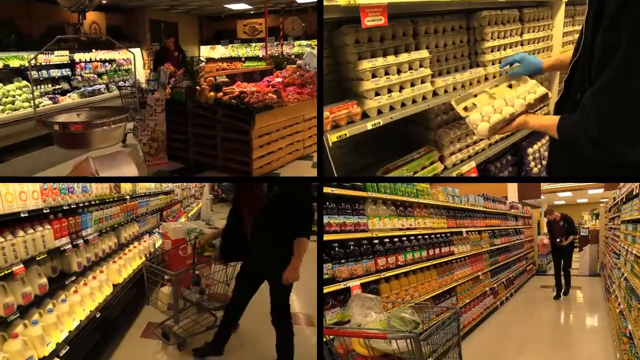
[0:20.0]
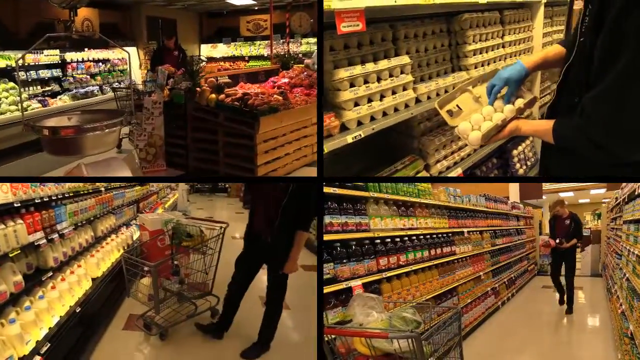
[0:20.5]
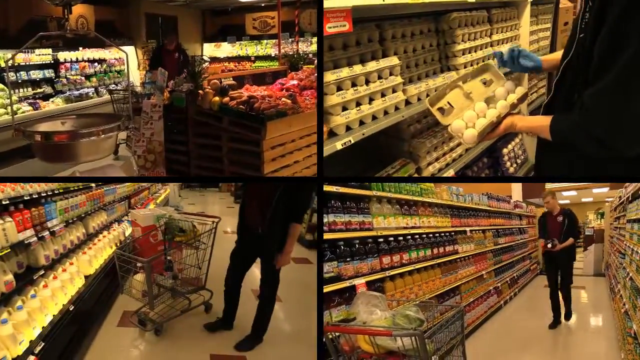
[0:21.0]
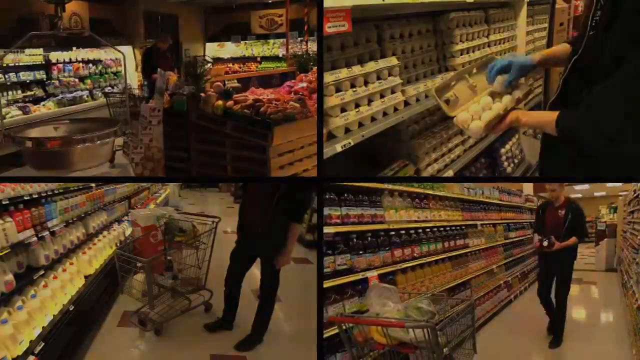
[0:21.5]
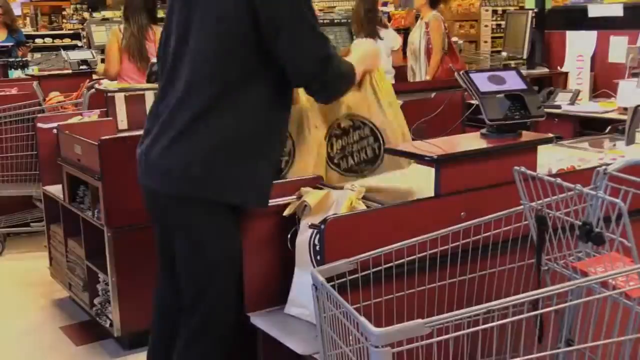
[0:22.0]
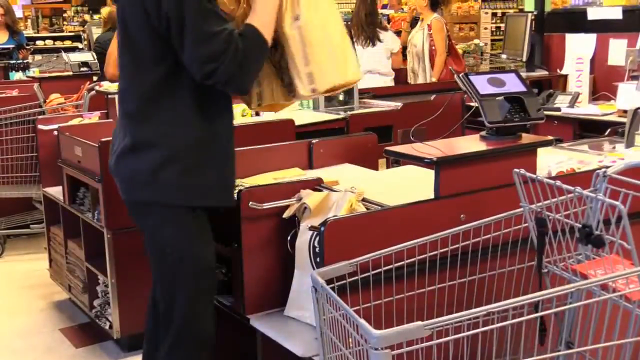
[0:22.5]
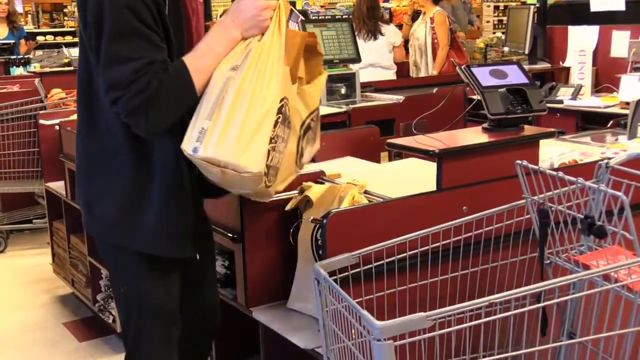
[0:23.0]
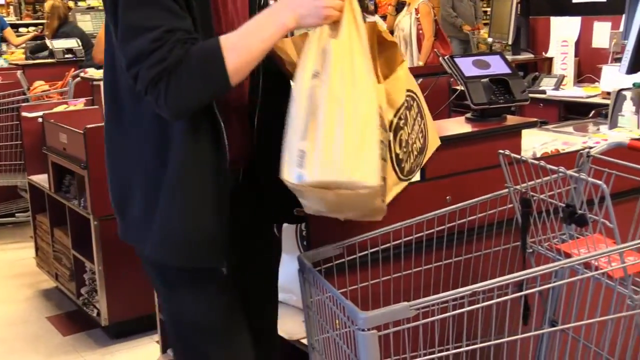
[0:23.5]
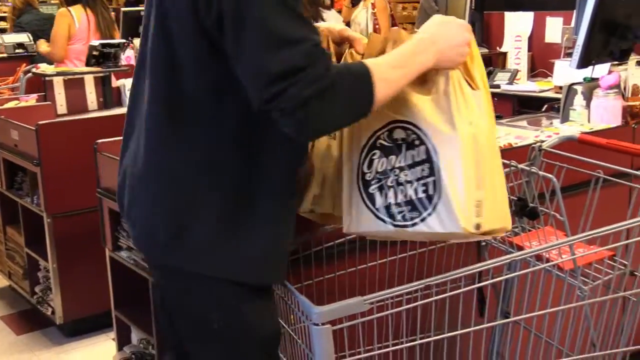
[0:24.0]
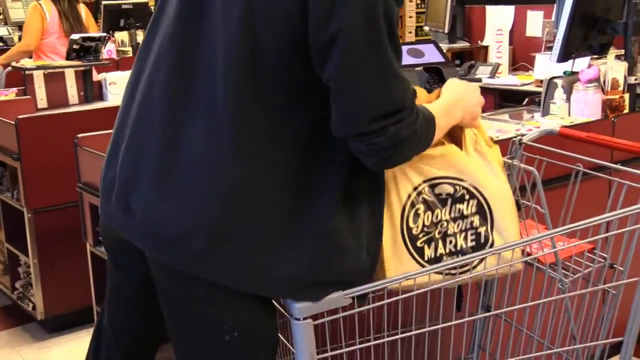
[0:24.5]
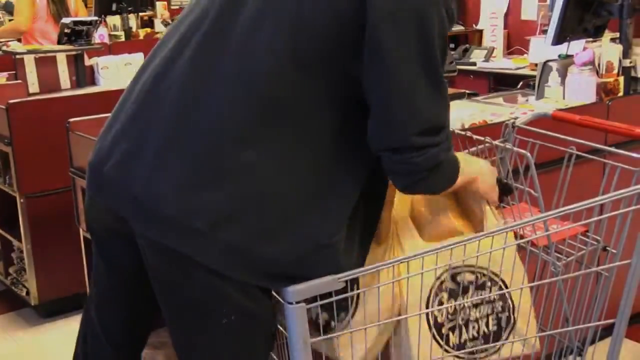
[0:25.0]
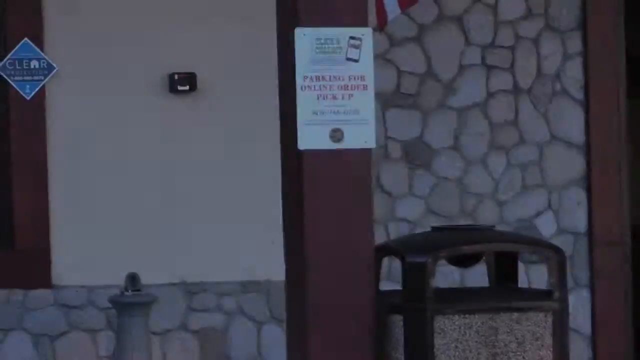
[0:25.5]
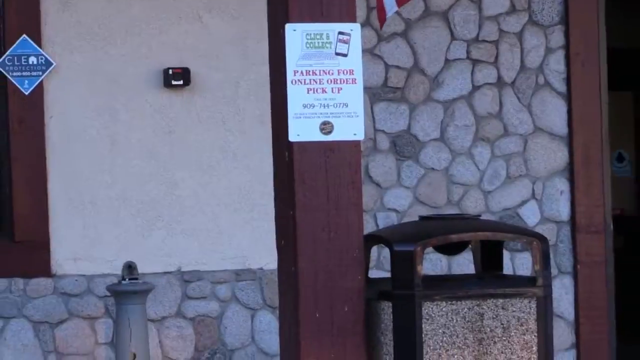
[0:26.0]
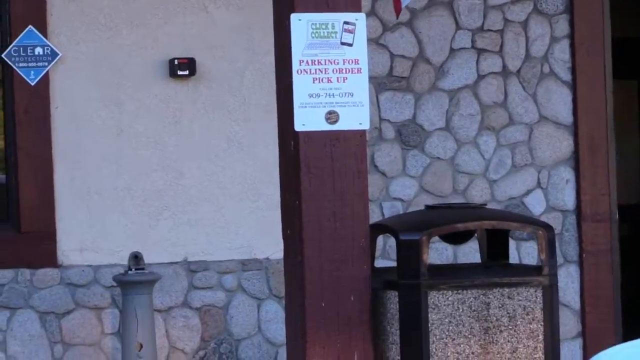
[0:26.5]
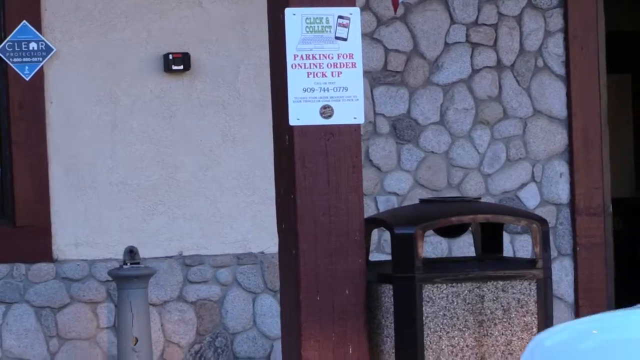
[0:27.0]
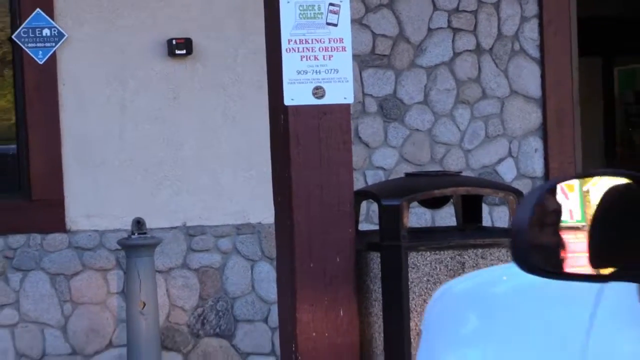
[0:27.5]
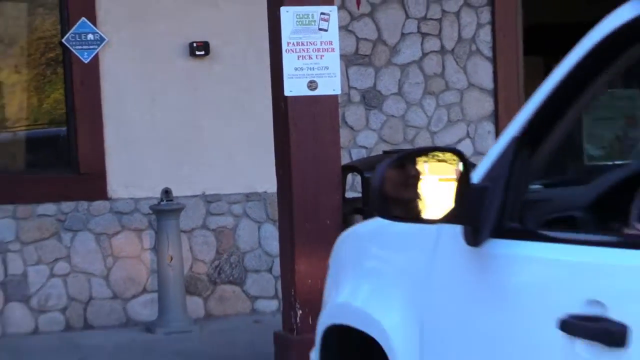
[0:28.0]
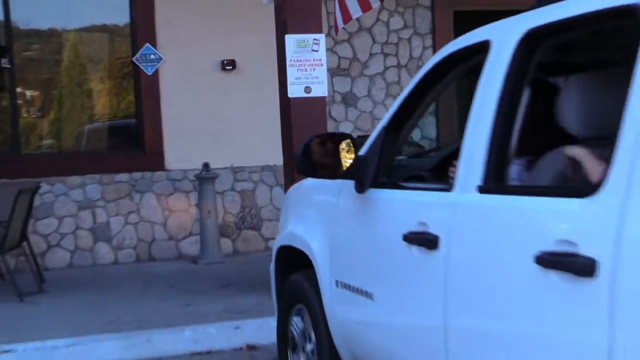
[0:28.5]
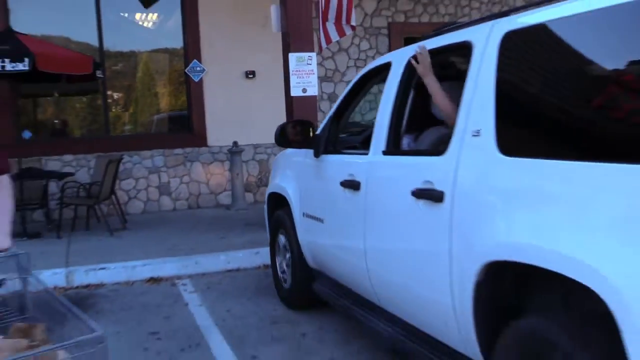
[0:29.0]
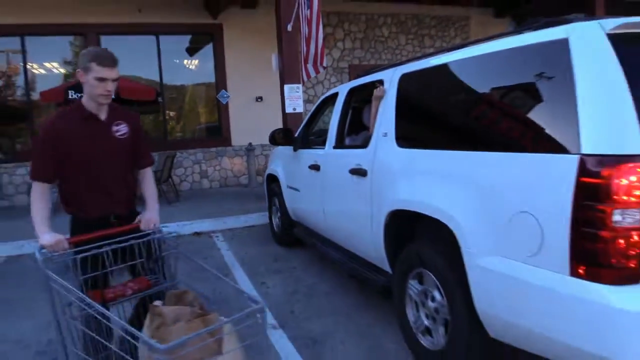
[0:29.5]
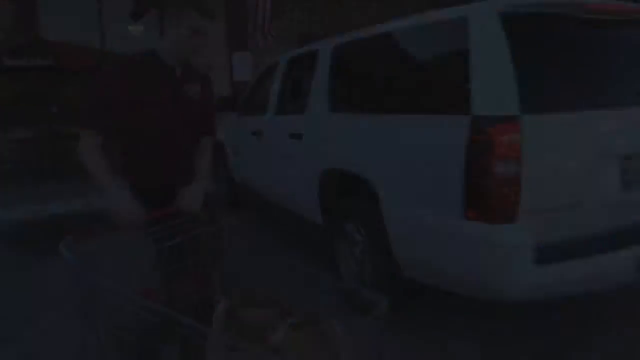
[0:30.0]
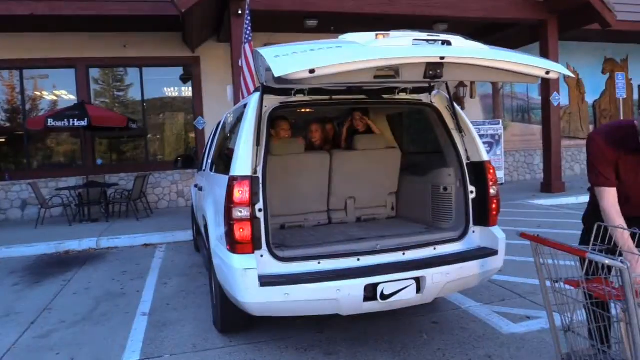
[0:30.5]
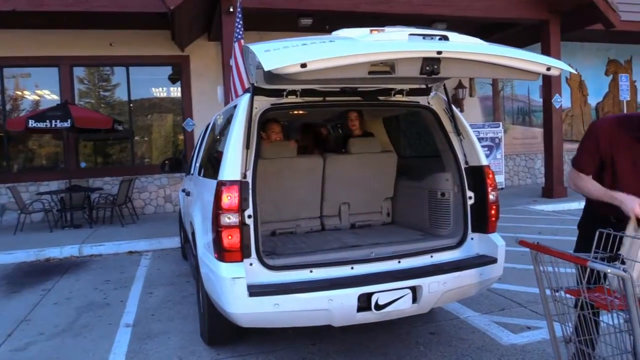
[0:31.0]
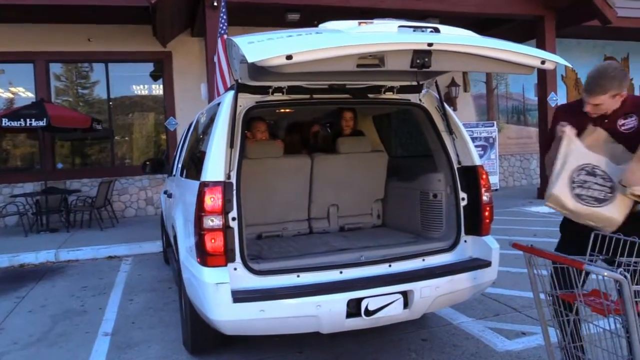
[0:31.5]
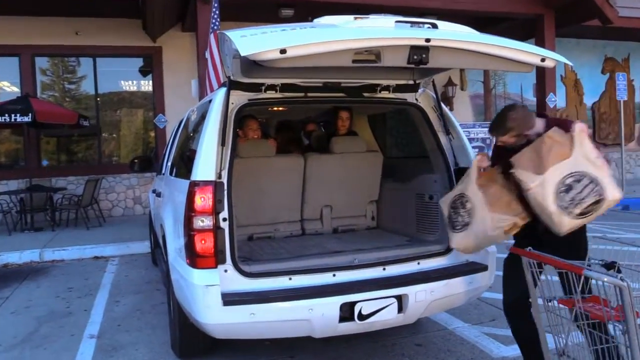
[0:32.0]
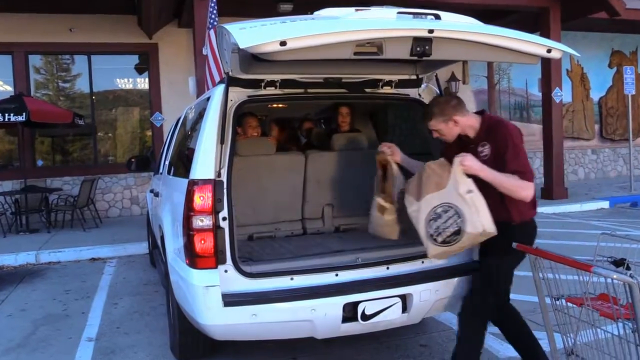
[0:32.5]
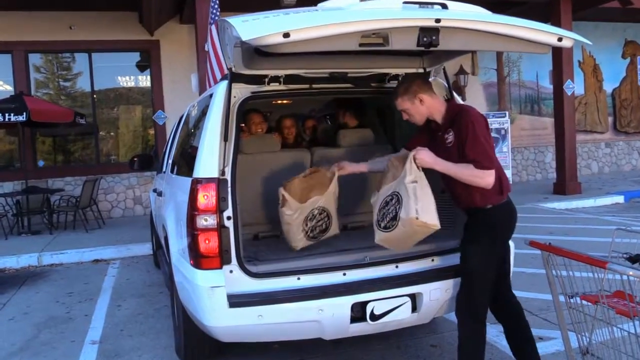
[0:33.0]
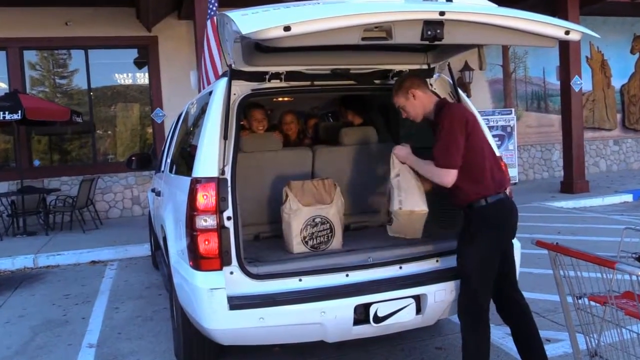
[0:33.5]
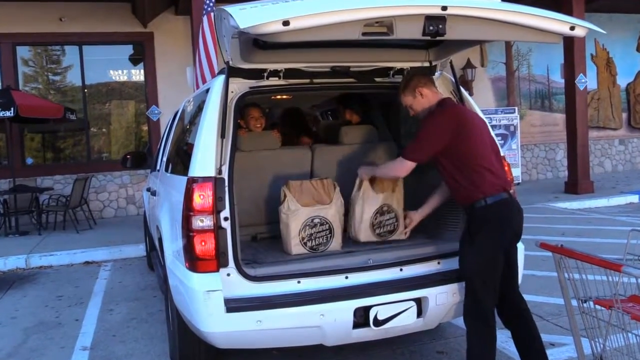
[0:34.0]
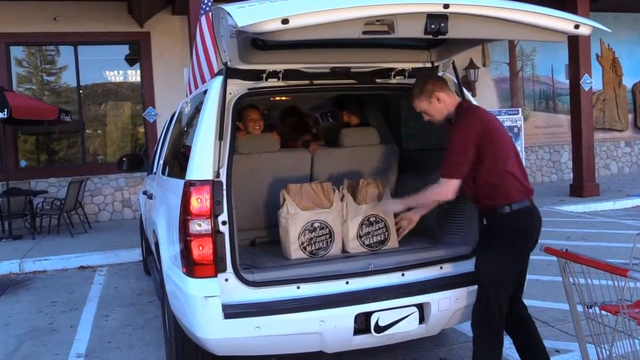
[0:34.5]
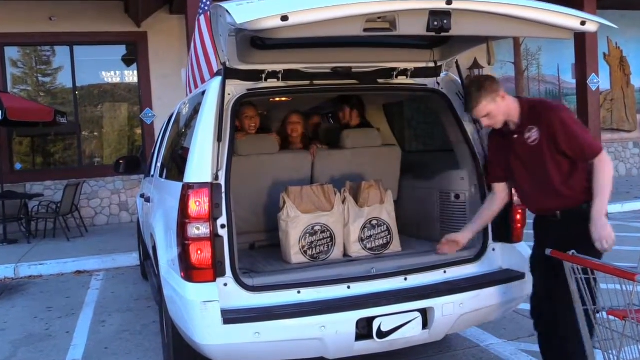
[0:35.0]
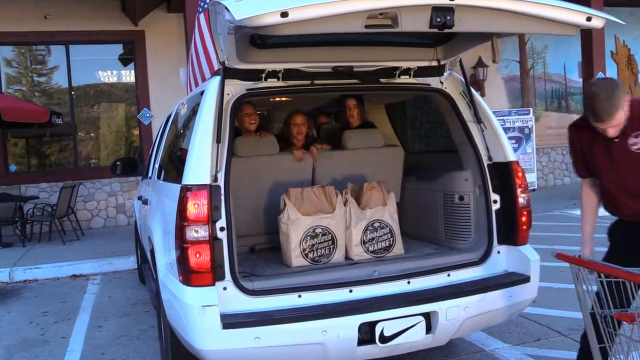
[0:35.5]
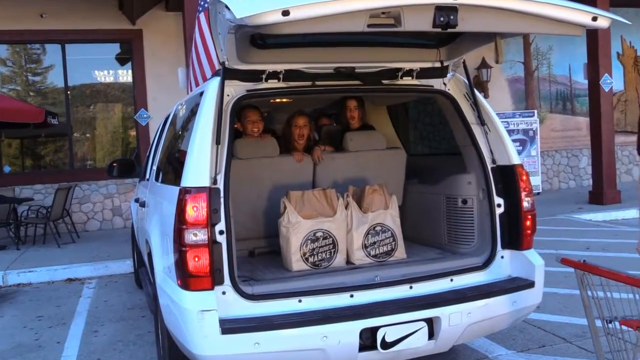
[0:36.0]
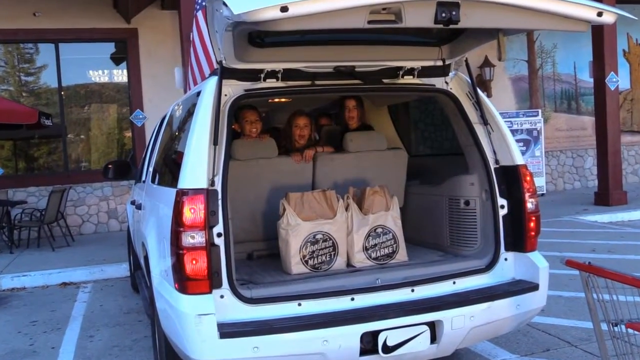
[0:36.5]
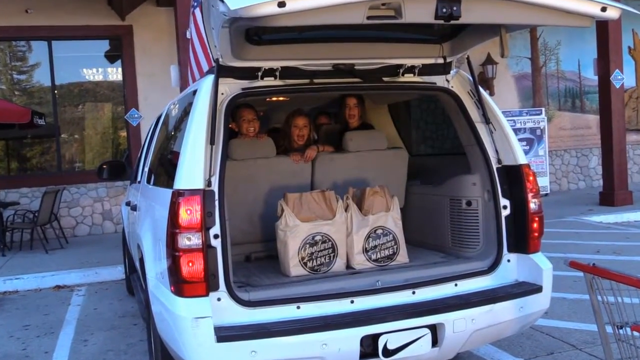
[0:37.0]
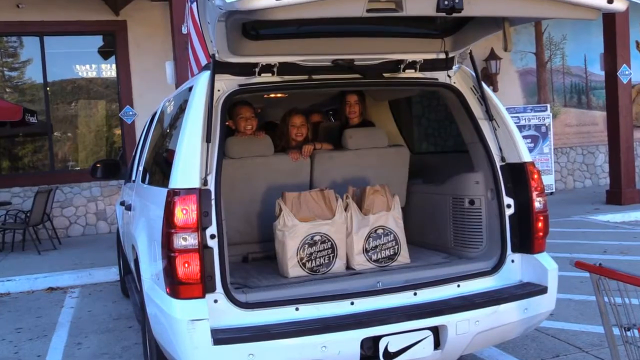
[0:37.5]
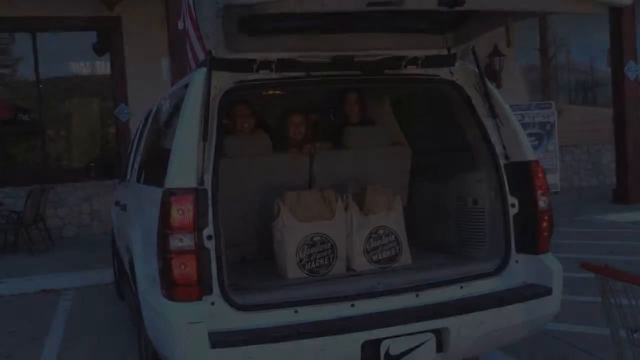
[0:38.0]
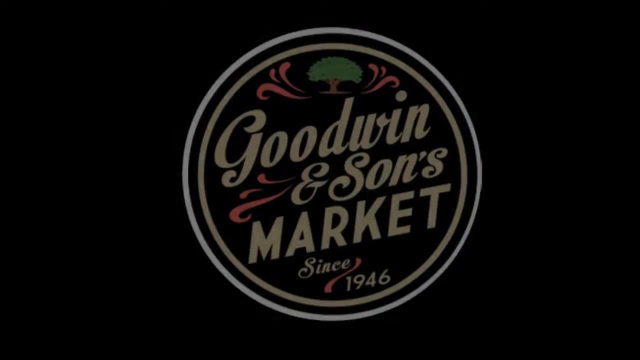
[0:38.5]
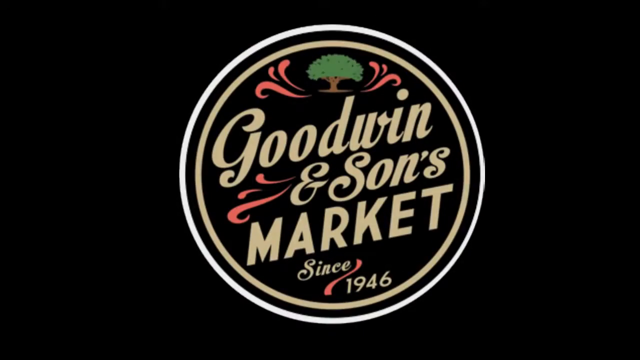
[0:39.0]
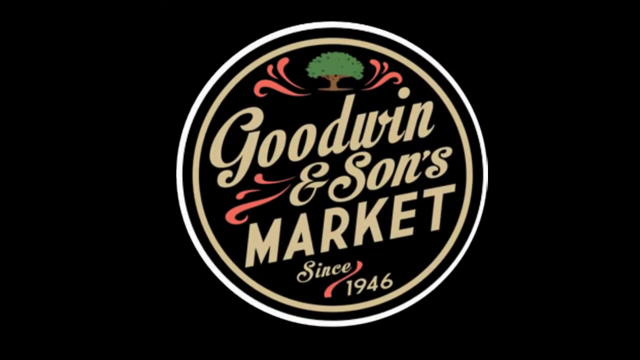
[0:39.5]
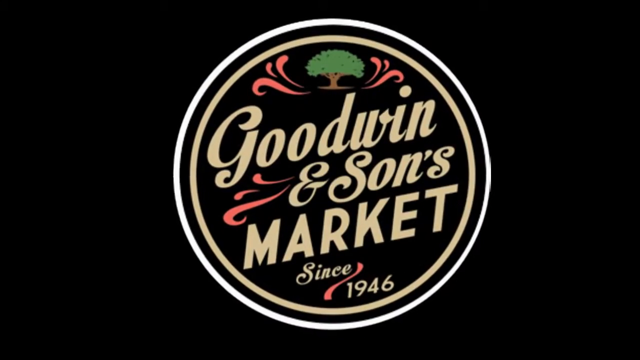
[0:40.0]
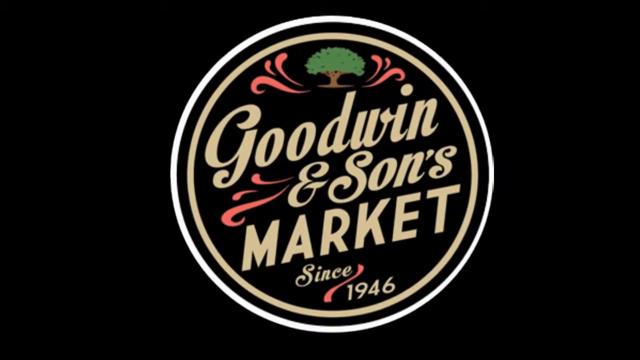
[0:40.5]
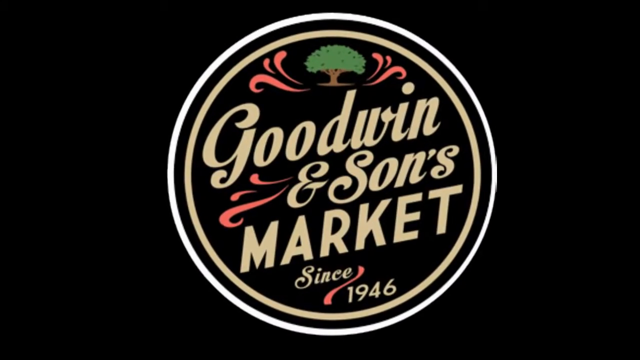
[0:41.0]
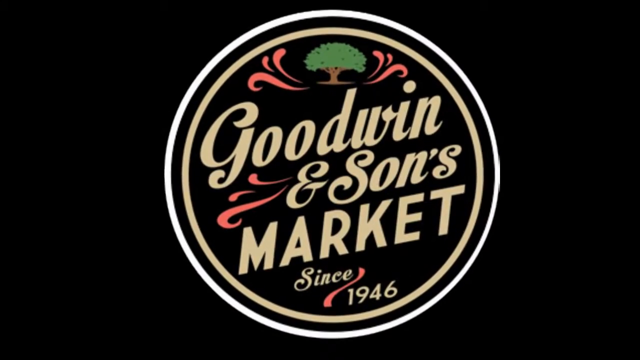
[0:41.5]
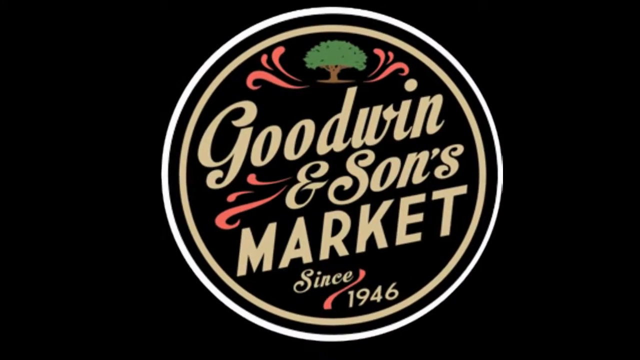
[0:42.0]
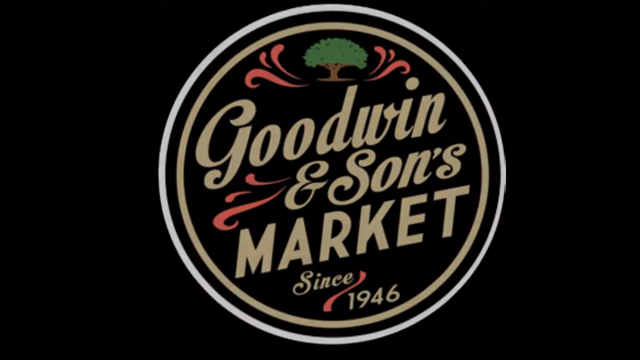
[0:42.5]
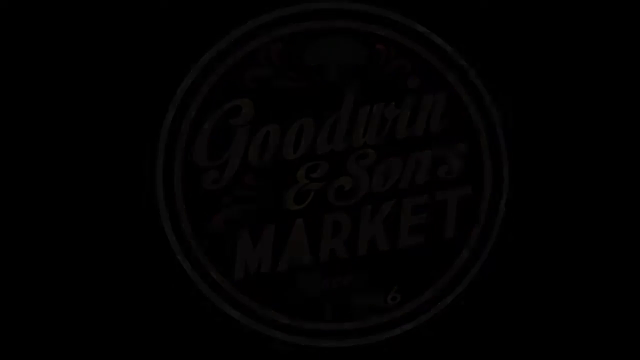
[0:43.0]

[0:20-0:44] The screen is split into four videos, two at the top and two at the bottom, showing other people filling orders and picking out eggs and other items for someone shopping online. A person pulls up in a white SUV, pushes a button and opens the back of the vehicle. Three kids in the back are turned around, looking at the person loading the groceries. Bags are being put in. There is an area with a sign that says "parking for pickup only", where a Caucasian man puts the groceries in the backseat and trunk area. At the very end, a sign says "Goodwin and Sons Market since 1946", with a tree that has some pink colorings shooting out of it.